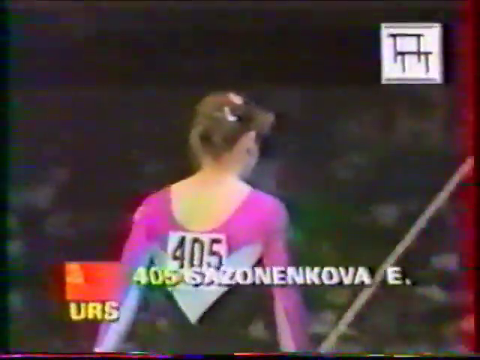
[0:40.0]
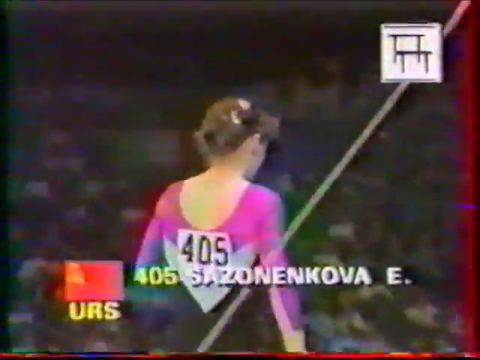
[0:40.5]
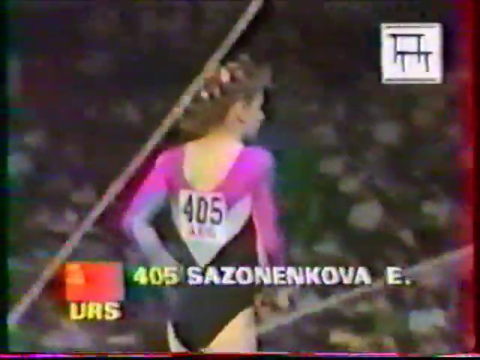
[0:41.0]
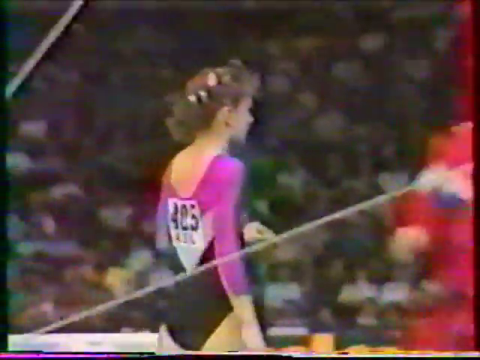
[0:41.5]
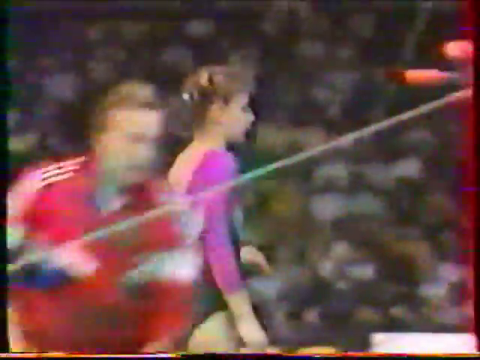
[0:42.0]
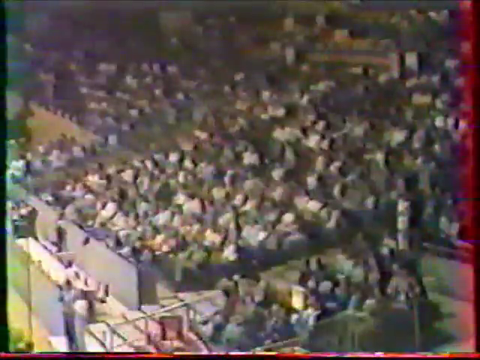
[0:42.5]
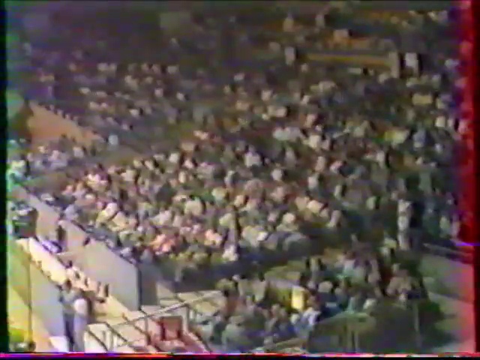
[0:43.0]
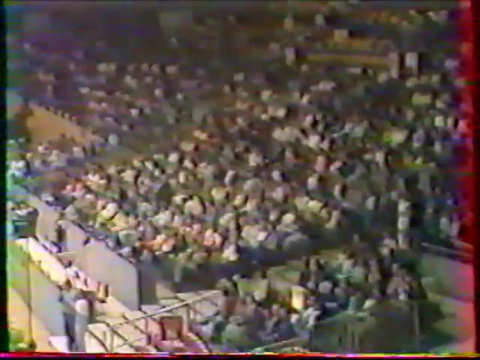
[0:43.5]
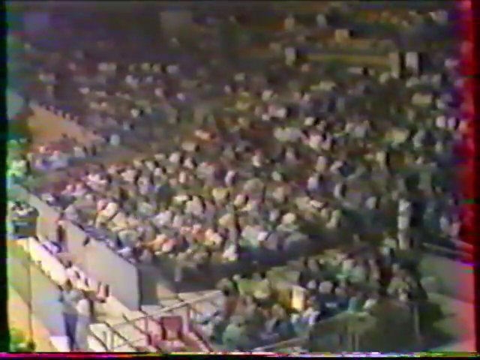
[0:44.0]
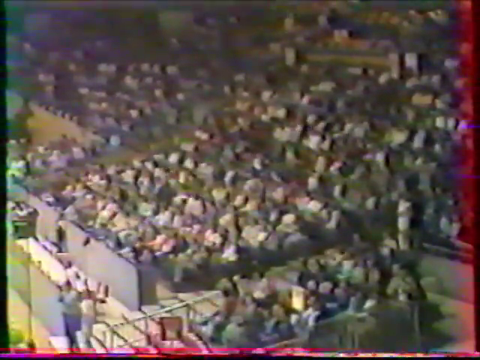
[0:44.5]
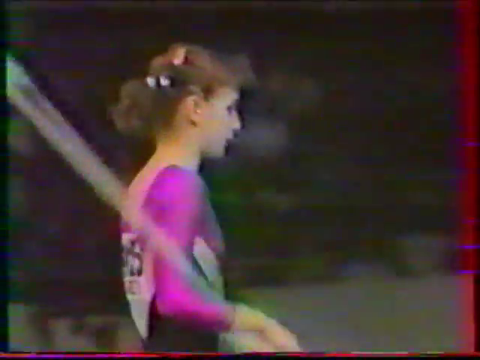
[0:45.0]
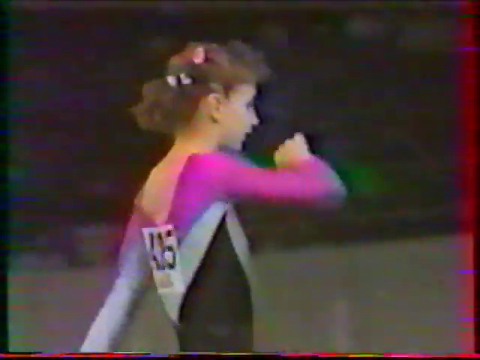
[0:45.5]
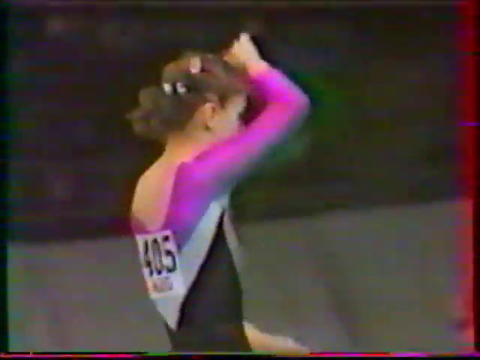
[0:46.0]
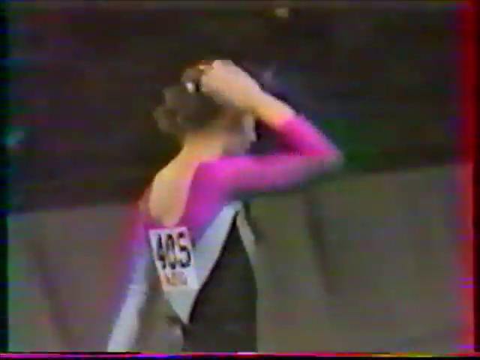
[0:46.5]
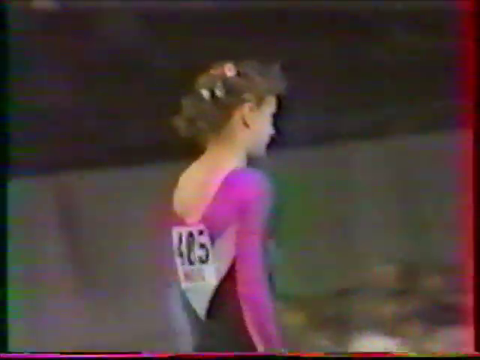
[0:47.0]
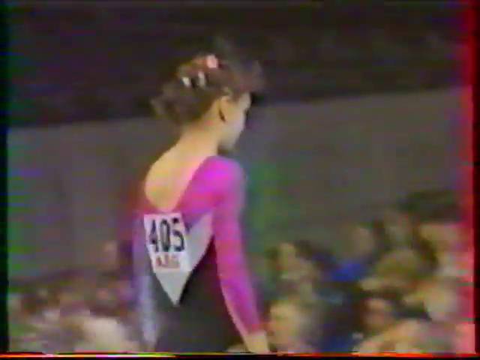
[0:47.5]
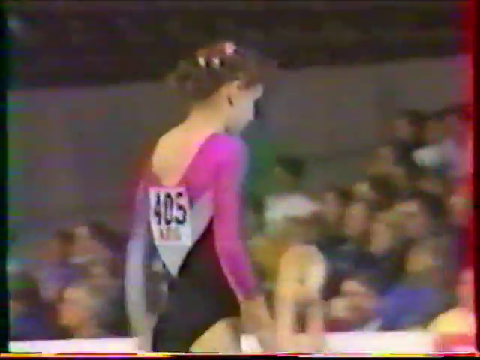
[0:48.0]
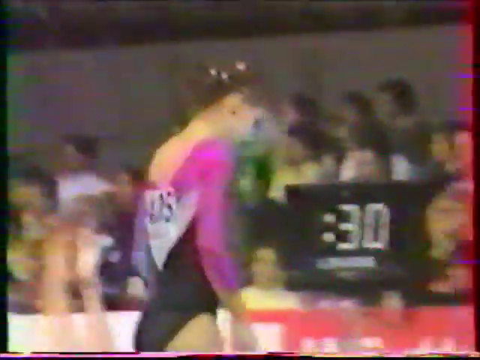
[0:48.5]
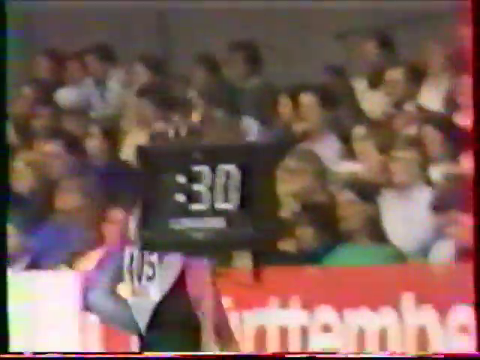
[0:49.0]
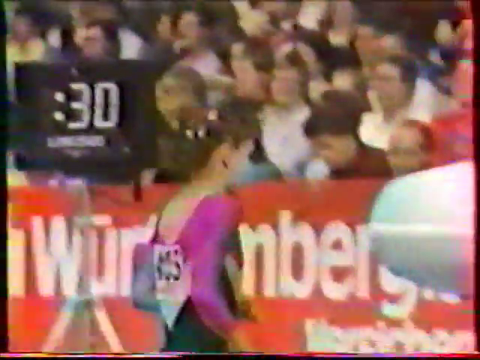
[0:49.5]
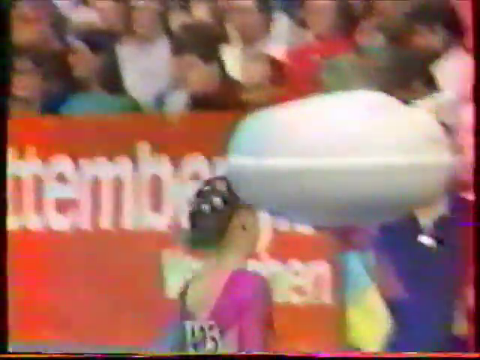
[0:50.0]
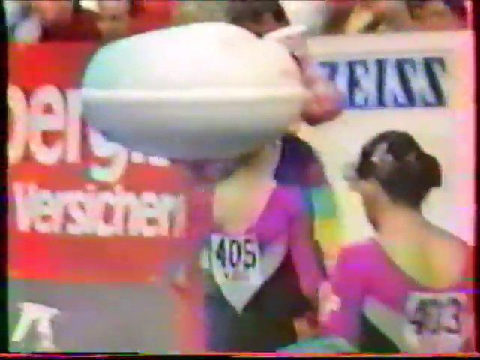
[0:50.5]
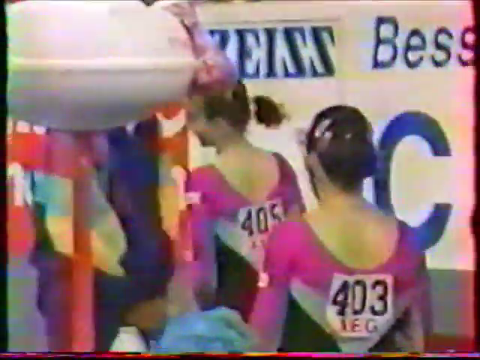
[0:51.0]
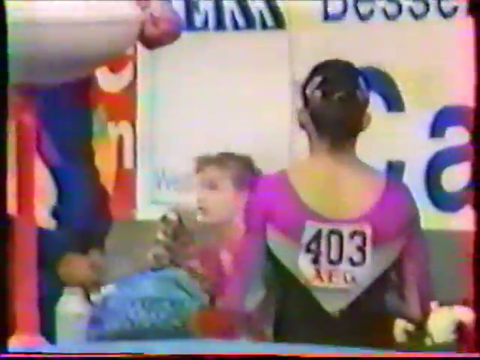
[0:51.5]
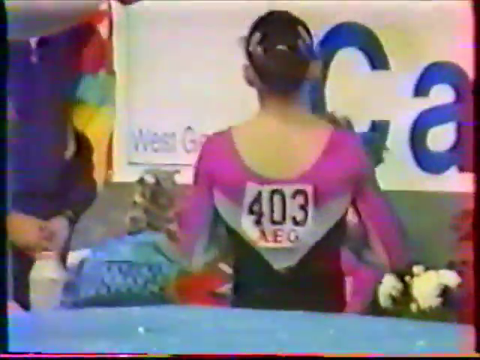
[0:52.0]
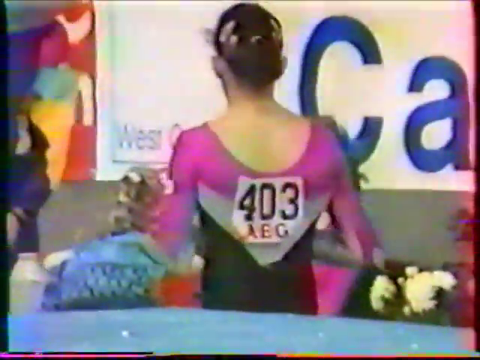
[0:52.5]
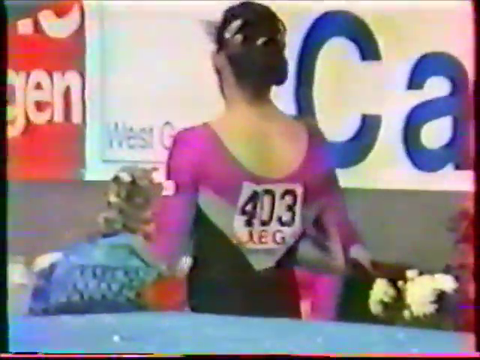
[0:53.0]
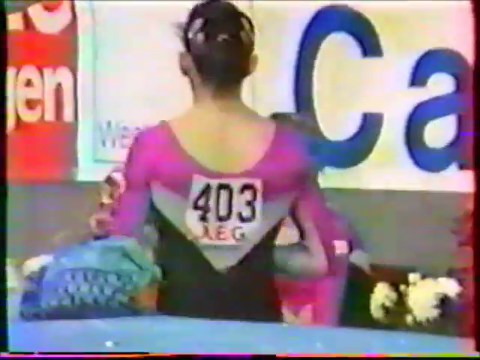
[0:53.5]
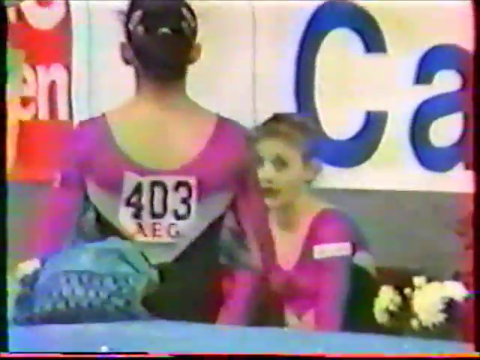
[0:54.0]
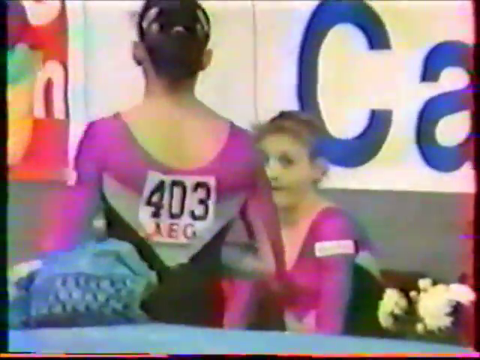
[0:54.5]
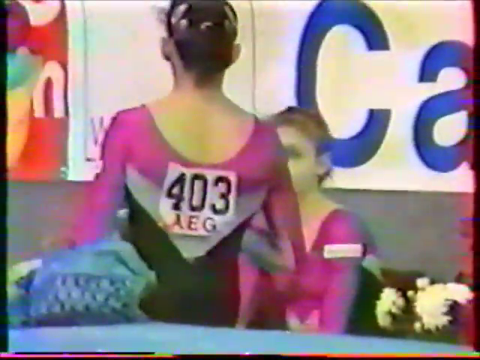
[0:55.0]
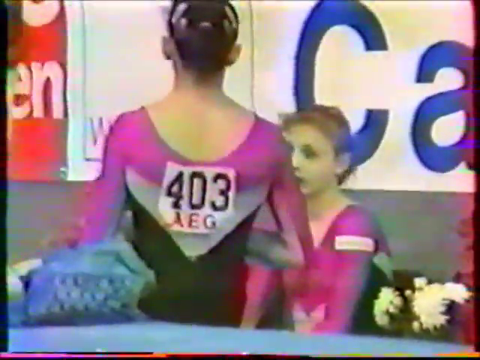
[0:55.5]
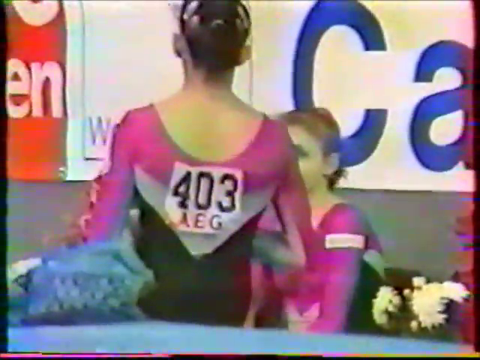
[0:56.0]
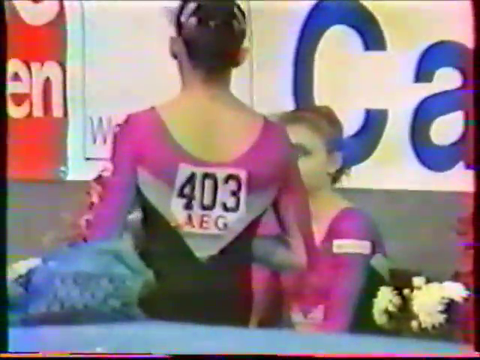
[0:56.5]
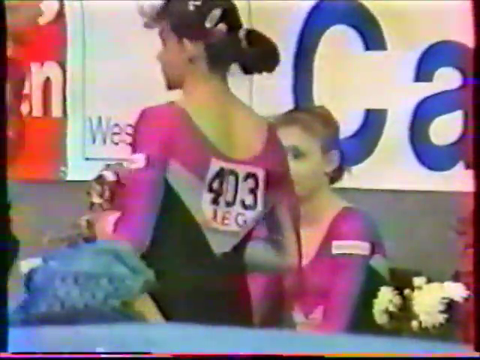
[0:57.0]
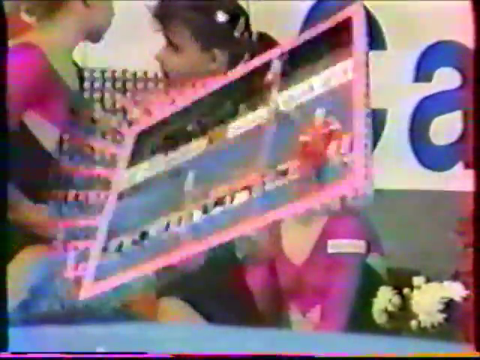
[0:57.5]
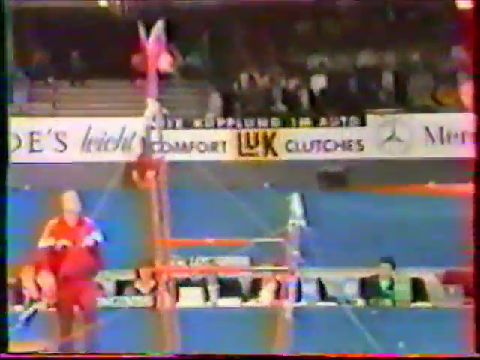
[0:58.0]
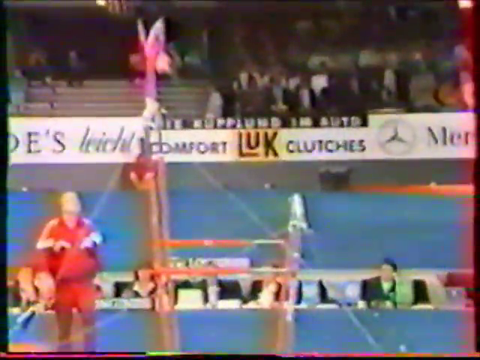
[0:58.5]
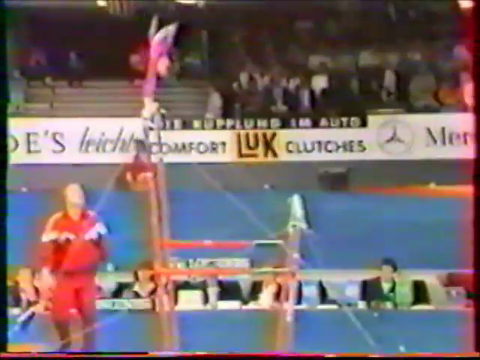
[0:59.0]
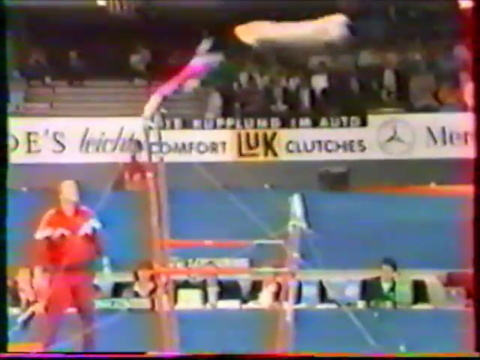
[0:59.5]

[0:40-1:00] At the top right of the screen is a white square containing symbols of two bars, indicating the parallel bars event. Having dismounted, the gymnast walks away from the left toward the right of the screen. There is a cut to quite blurred but packed crowd scenes. She raises her right arm and bends it at the elbow, as if mopping her brow and moving hair off her forehead. She walks past a clock or display screen showing a colon followed by a three and a zero. A red and white advertising banner comes up to her shoulder as she steps down to a lower area, with a very busy crowd behind it. She walks to the area where her teammates are waiting, turns to her left, makes a half turn and sits out of sight behind a teammate, who then moves to the left. The teammate wears a "403 AEG" badge on the back of her leotard. The gymnast who has just performed is seen breathing heavily.